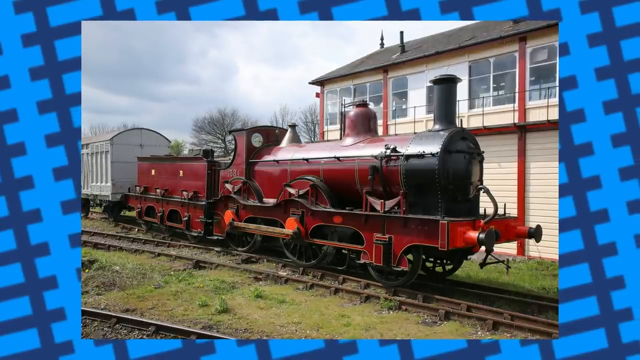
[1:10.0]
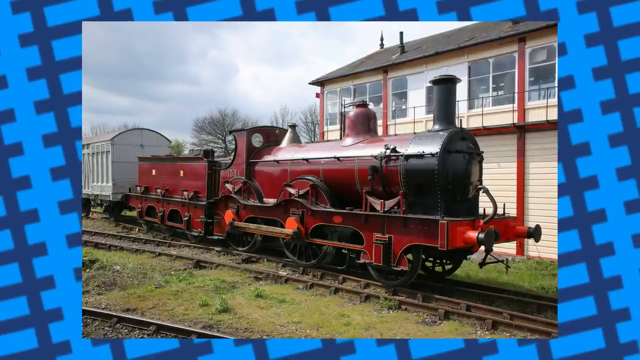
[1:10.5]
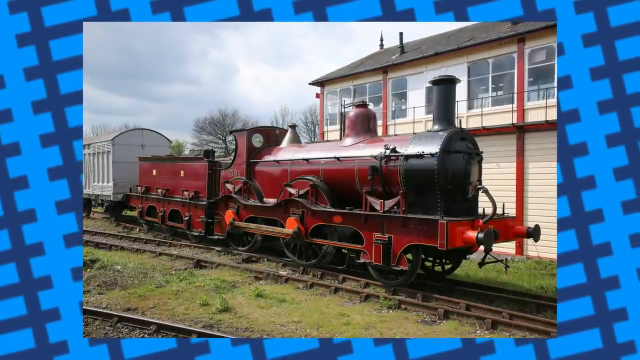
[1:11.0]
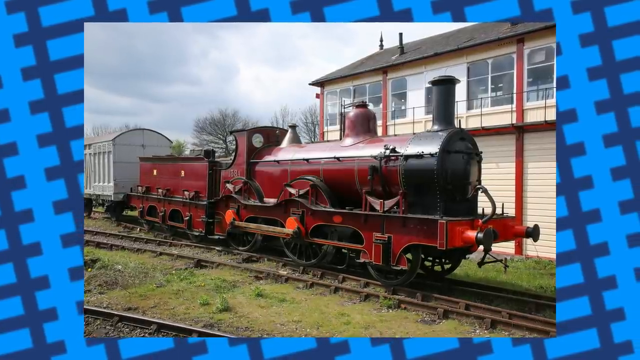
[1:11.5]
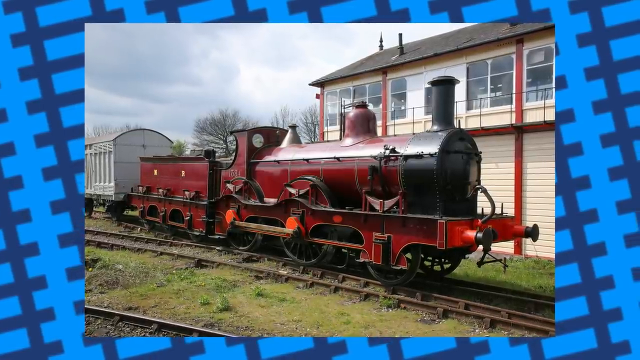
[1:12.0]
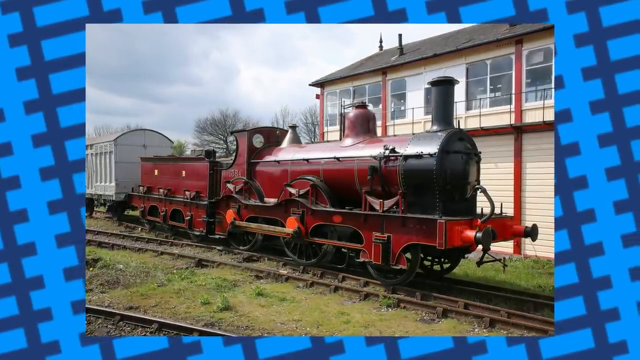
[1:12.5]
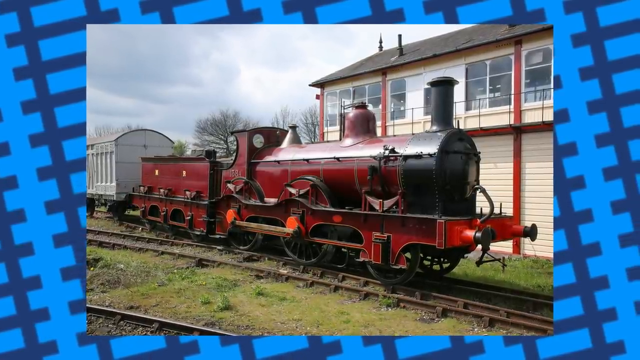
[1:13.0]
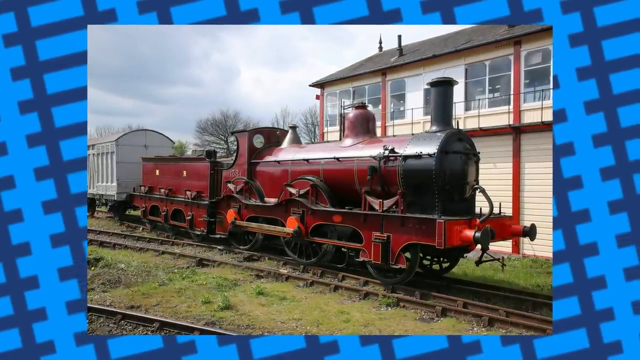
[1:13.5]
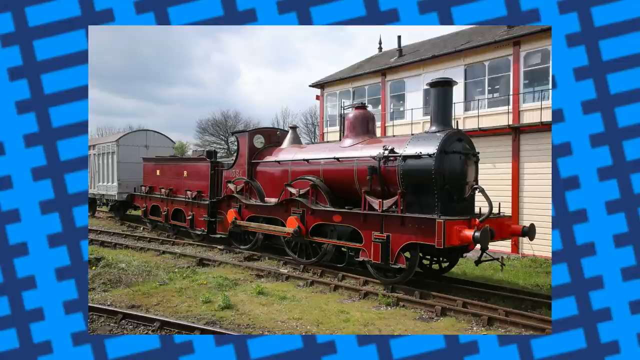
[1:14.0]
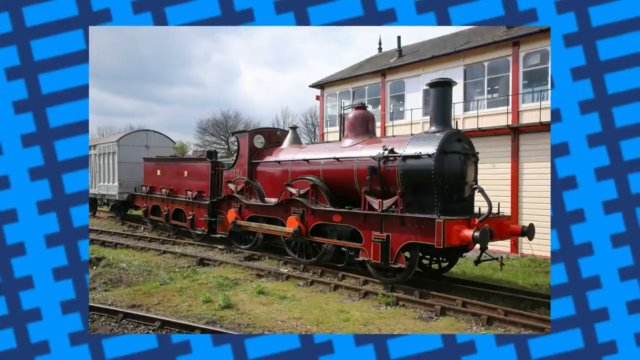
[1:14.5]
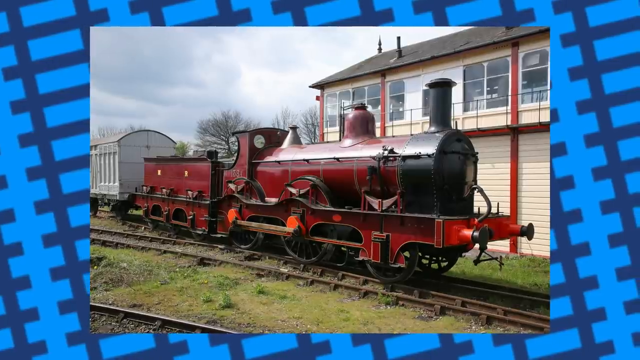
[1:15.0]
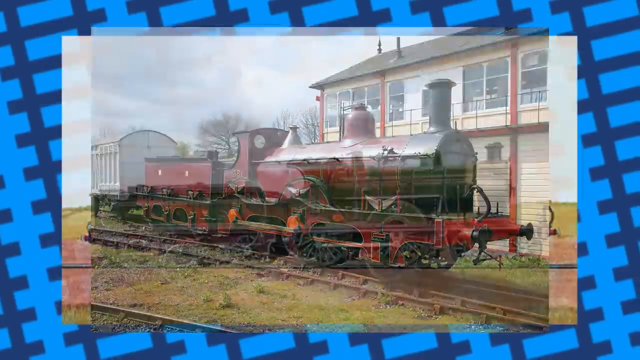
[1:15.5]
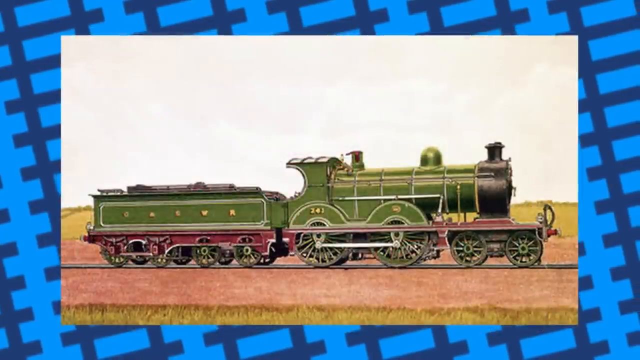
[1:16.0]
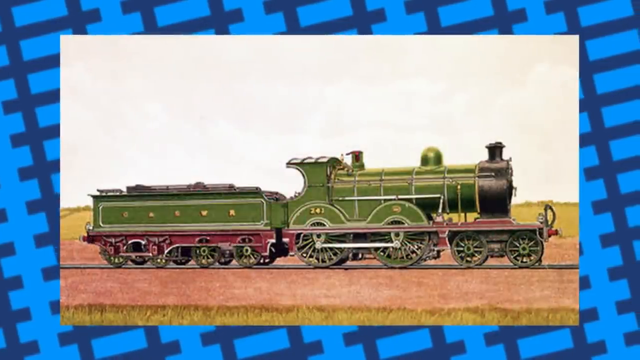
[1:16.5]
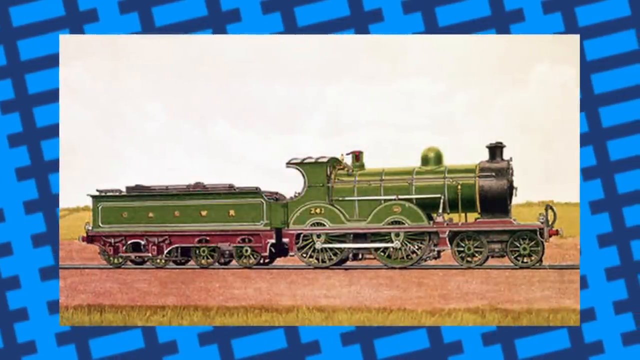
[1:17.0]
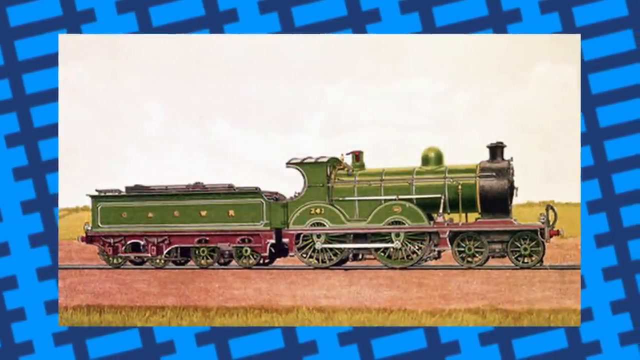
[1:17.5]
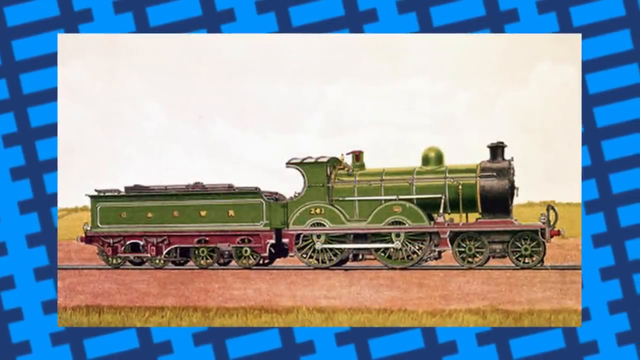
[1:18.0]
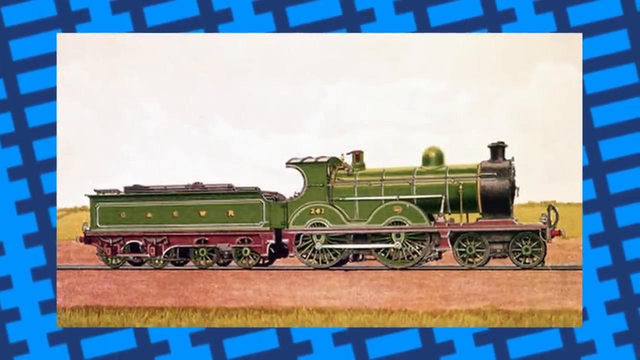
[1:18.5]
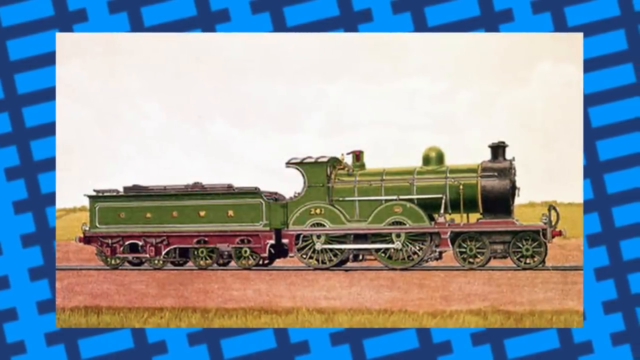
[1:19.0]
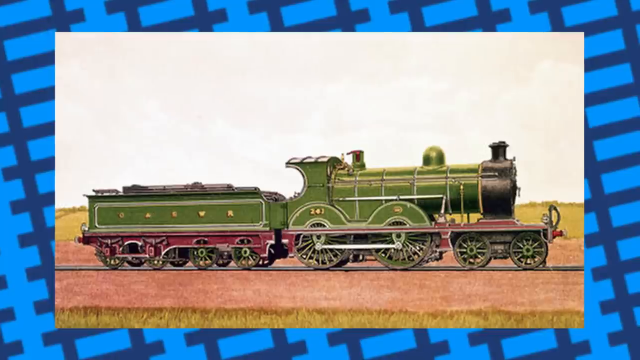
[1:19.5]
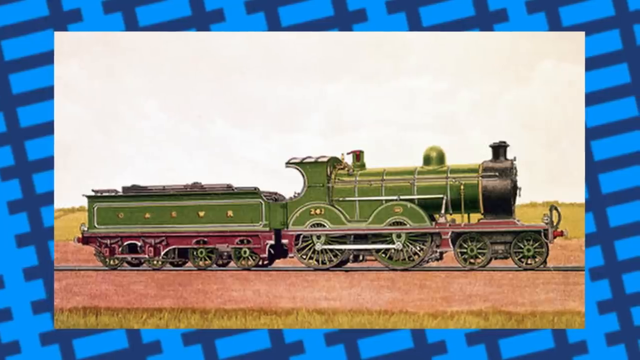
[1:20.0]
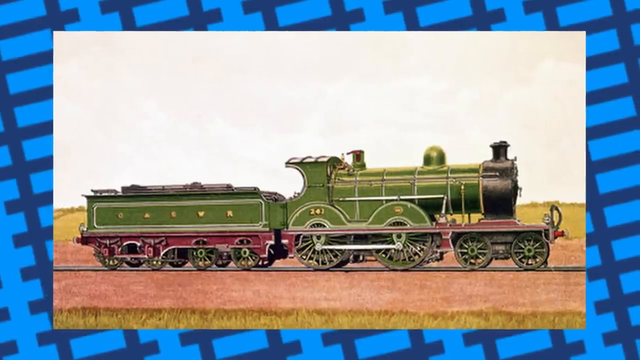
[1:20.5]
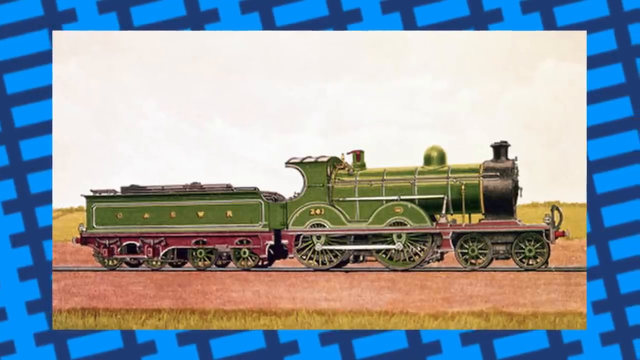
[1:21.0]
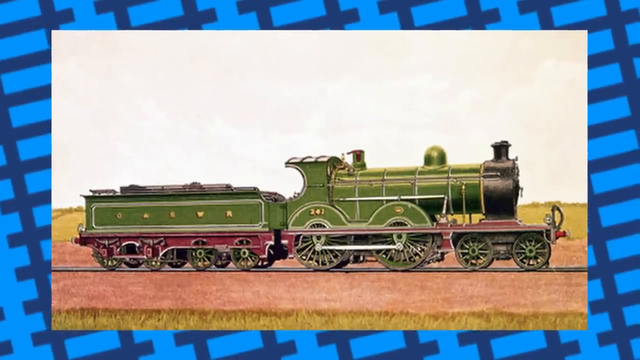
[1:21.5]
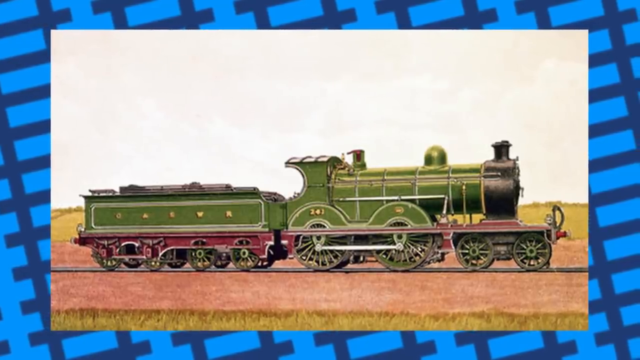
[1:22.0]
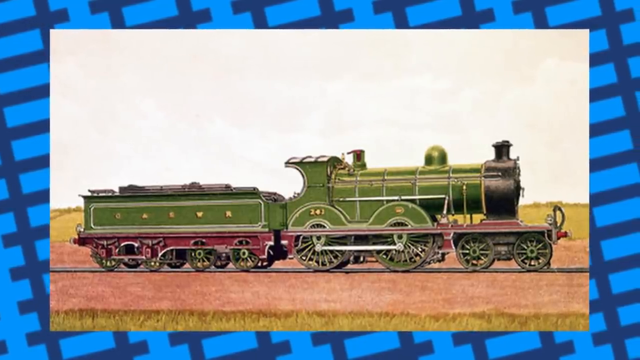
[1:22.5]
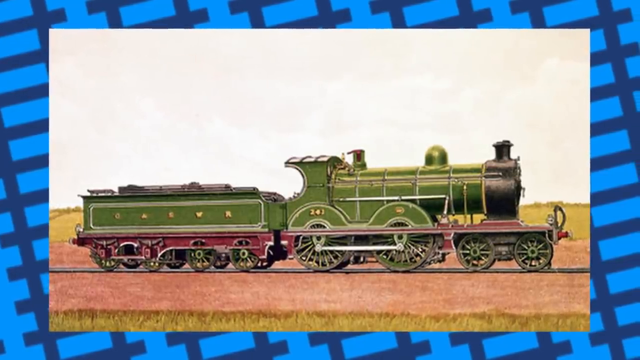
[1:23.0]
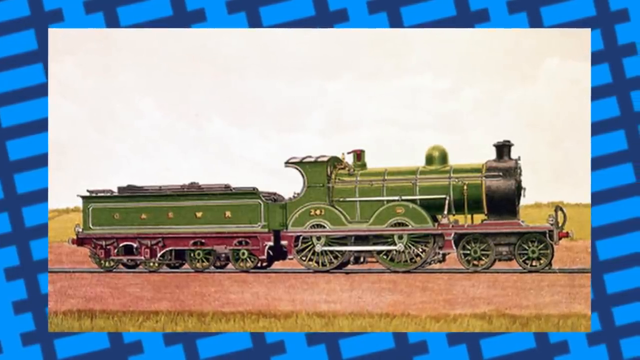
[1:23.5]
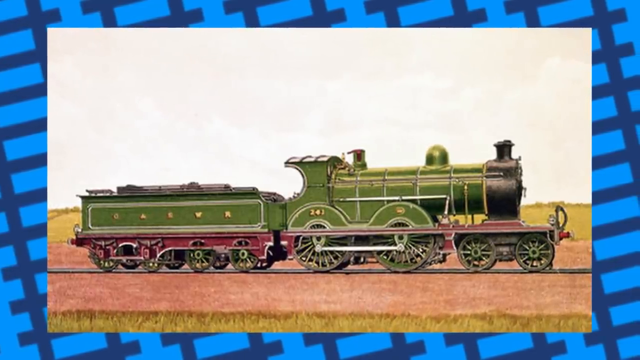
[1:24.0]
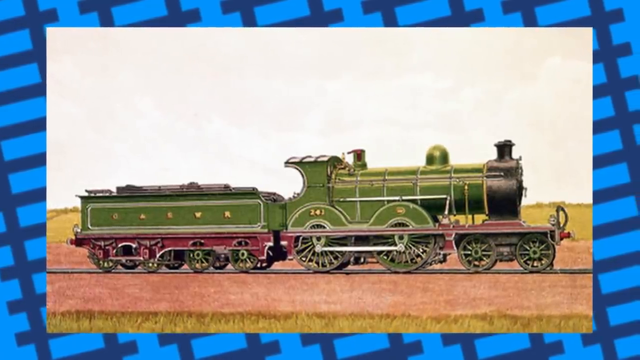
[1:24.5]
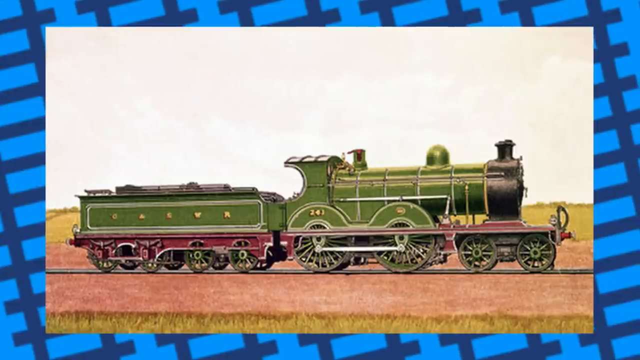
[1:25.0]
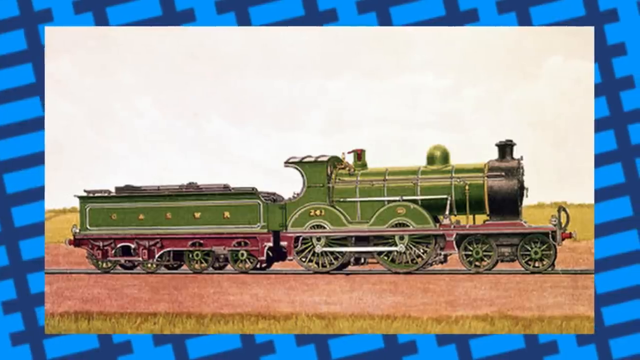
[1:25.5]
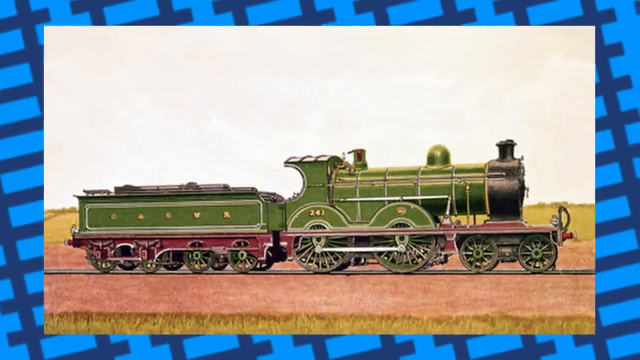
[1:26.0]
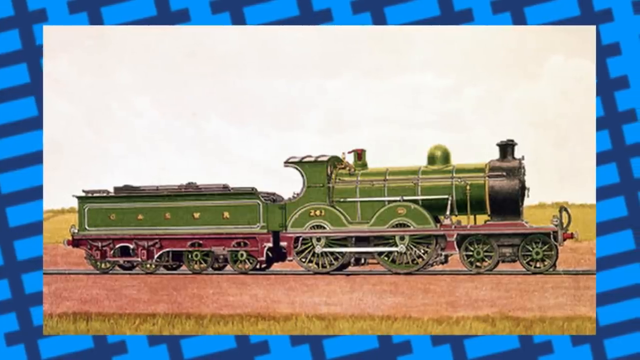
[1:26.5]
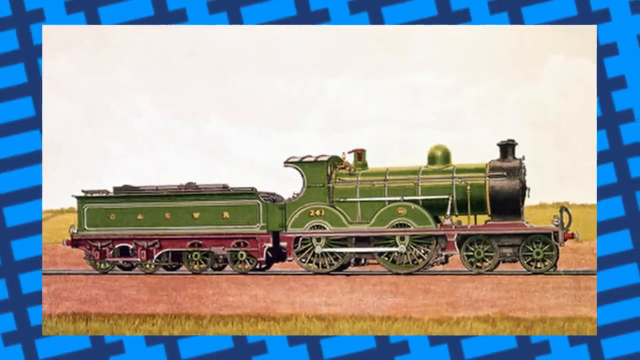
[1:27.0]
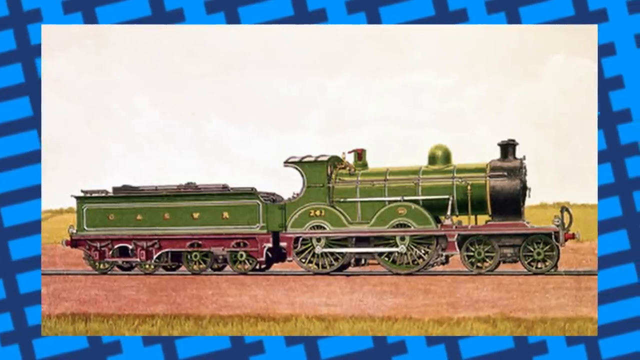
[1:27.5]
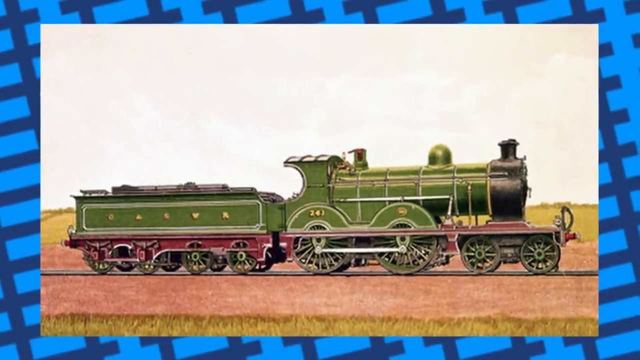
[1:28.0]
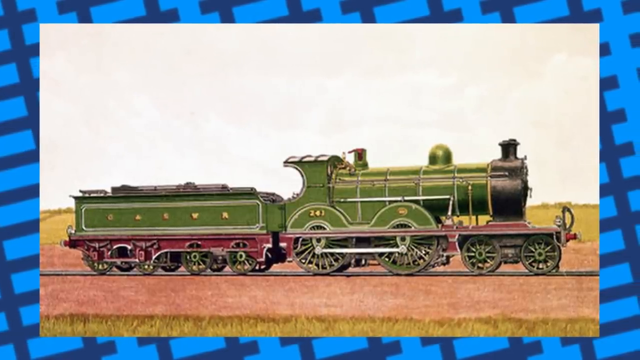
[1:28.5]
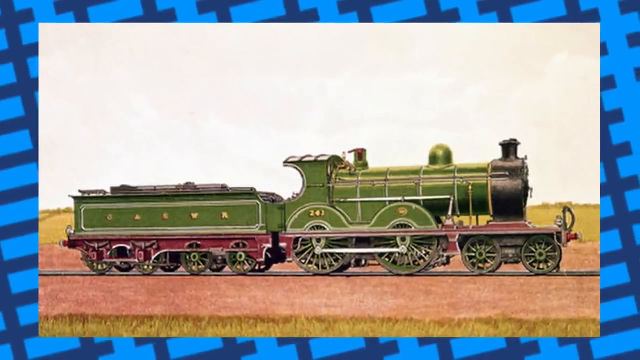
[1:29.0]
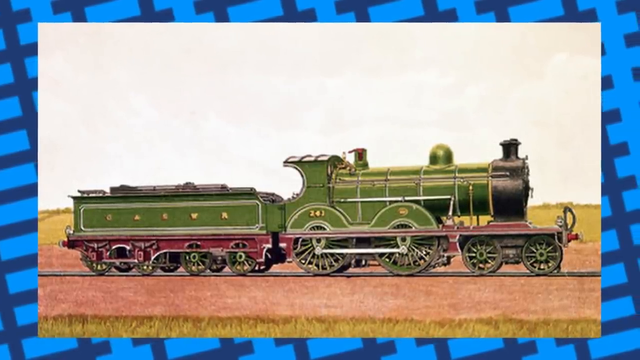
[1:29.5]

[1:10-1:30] The same train with the red and black front and light gray or white cars remains on the flat landscape, with leafless trees in the background, a kind of overcast sky, and the two-story white building with white siding and red trim on the bottom, lots of windows on the second floor, and a black slanted roof. The picture then switches to a train that is just the front part and one car. This train is mostly green, with red on the bottom around the wheels and some yellow accents, and its stack at the front is black. It is traveling along what looks like an area of dirt, with some grass in the background. This is a drawing, not an actual photograph of a train. The background is still light blue with dark blue train tracks.